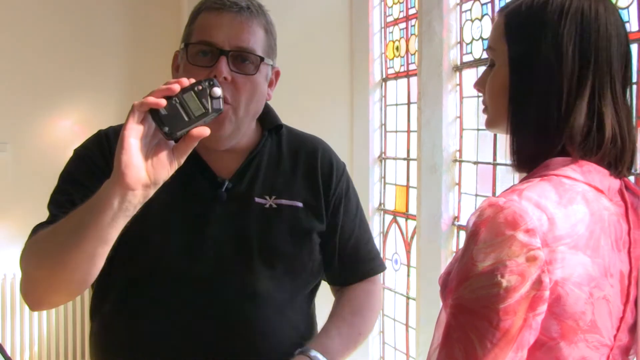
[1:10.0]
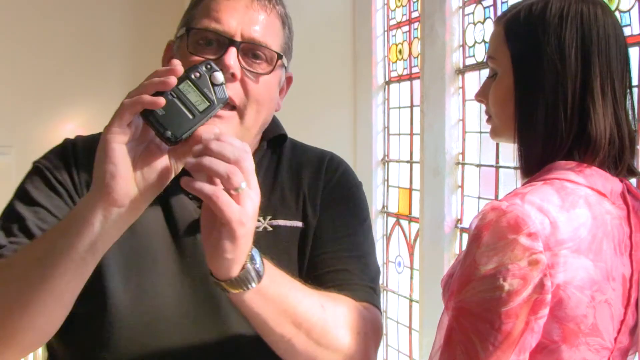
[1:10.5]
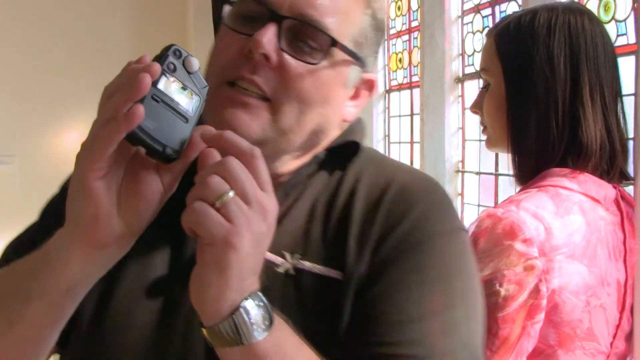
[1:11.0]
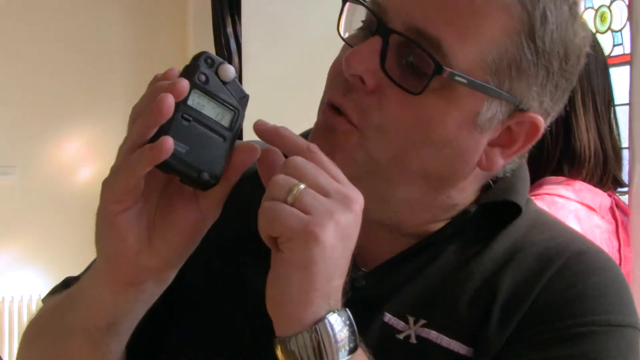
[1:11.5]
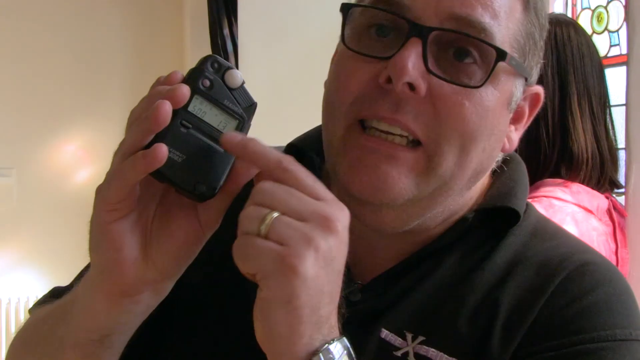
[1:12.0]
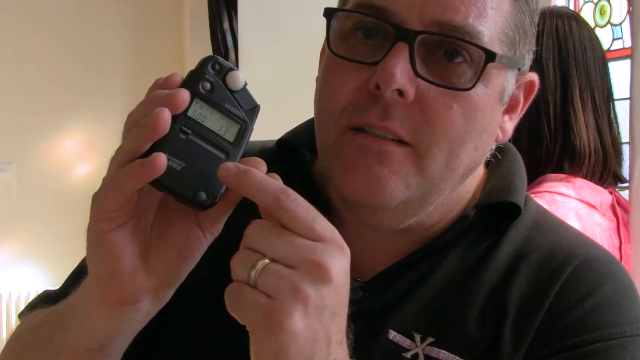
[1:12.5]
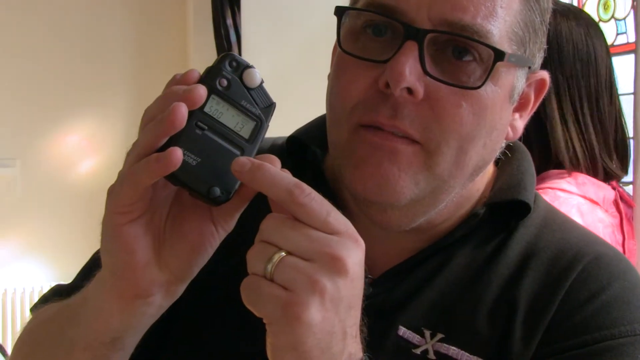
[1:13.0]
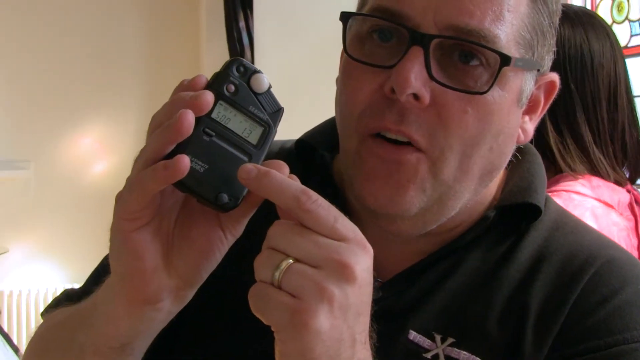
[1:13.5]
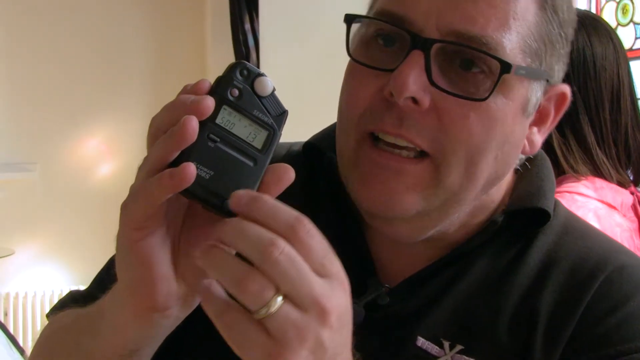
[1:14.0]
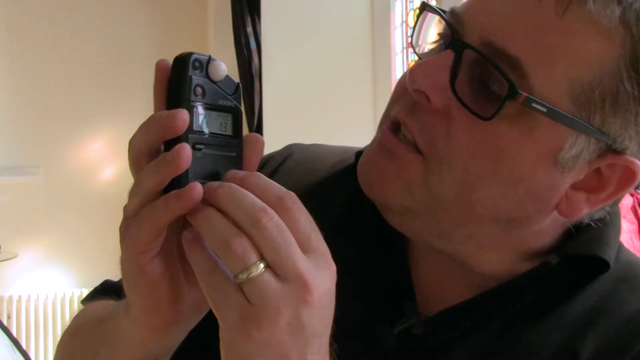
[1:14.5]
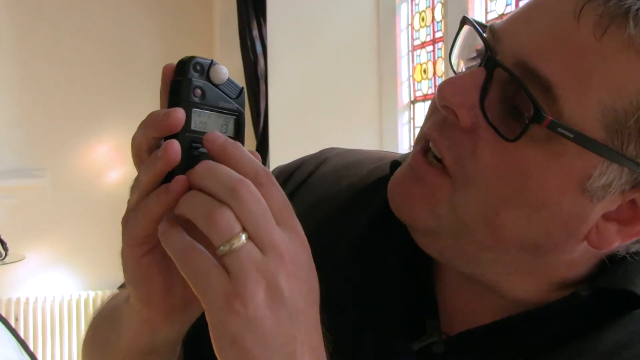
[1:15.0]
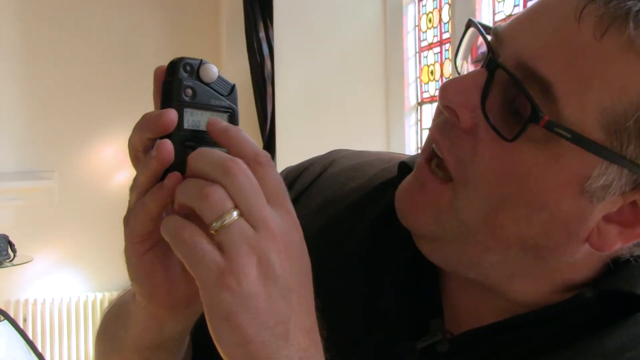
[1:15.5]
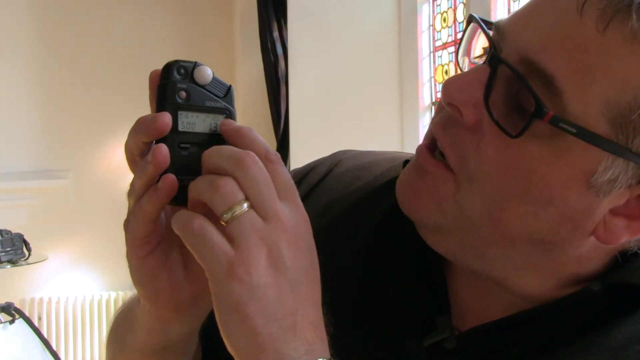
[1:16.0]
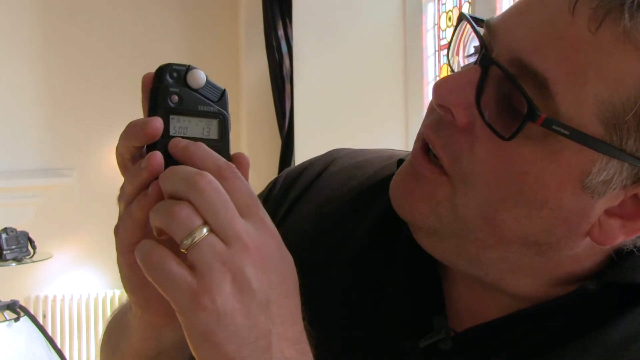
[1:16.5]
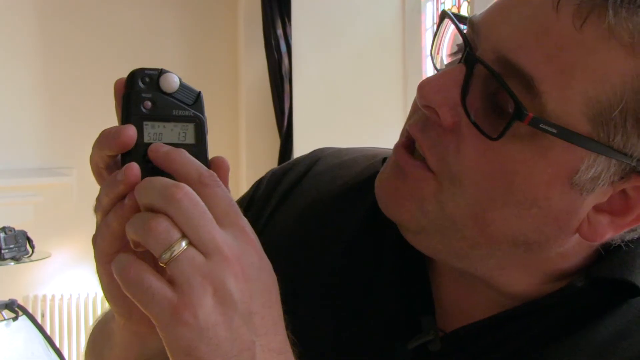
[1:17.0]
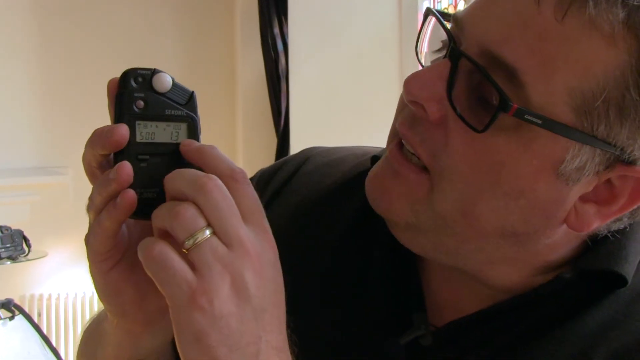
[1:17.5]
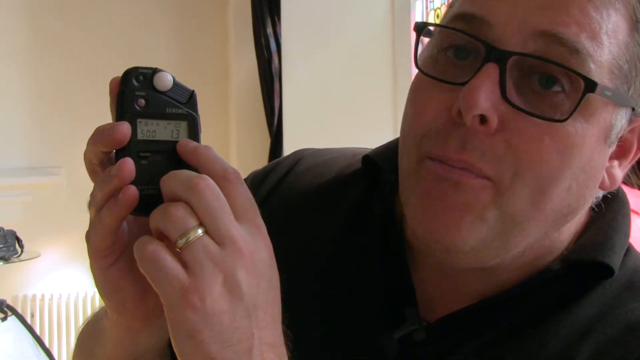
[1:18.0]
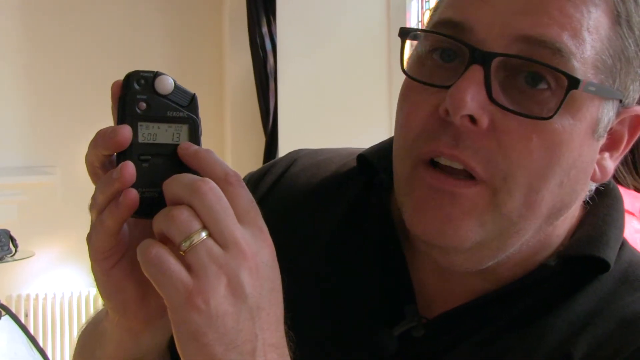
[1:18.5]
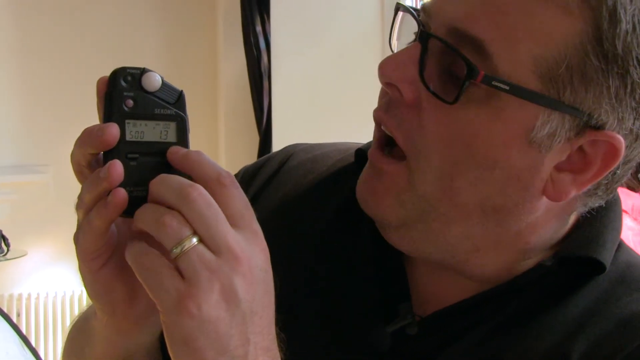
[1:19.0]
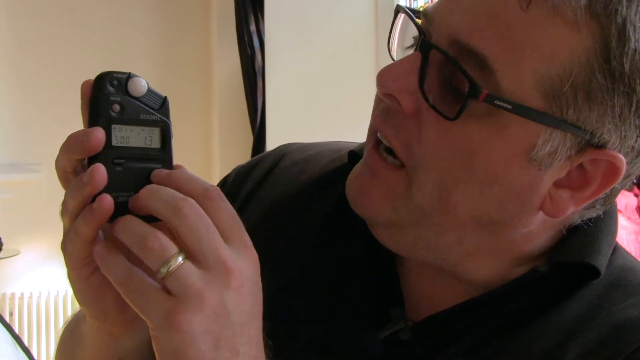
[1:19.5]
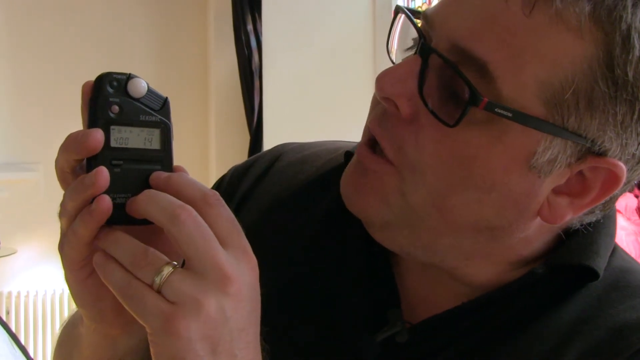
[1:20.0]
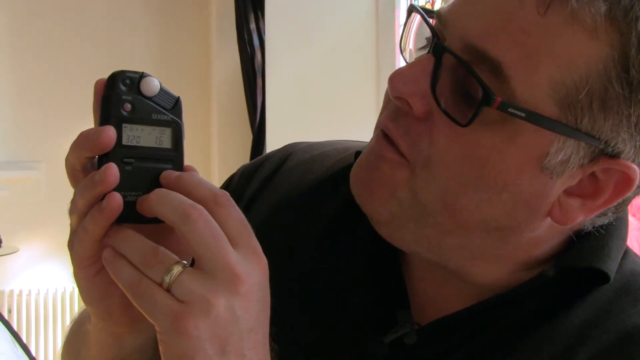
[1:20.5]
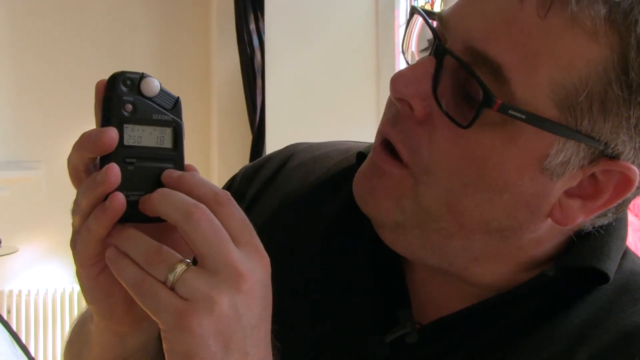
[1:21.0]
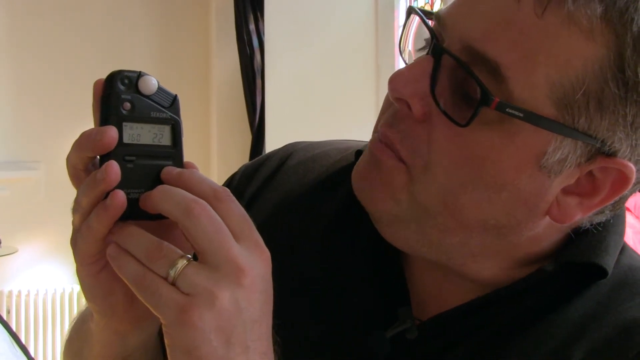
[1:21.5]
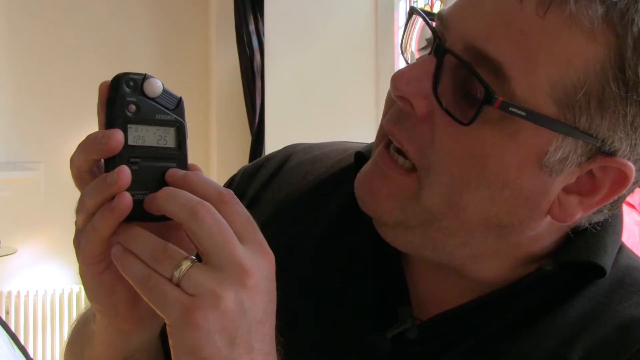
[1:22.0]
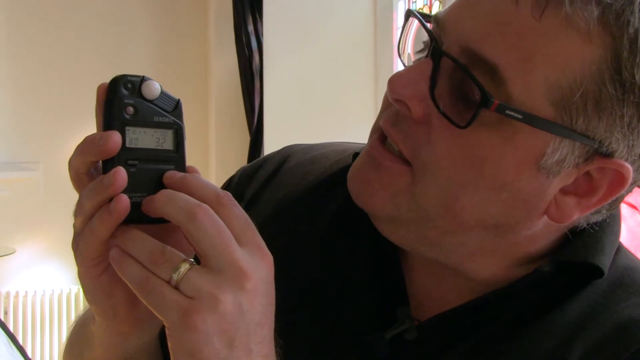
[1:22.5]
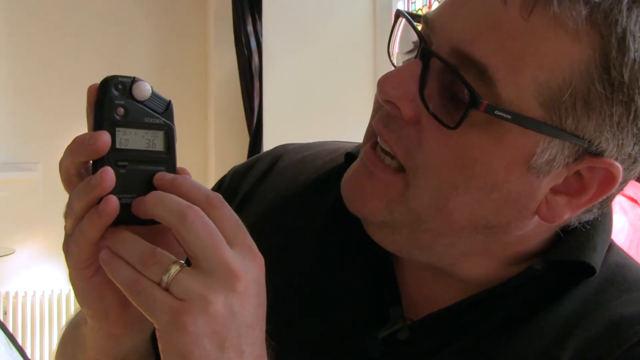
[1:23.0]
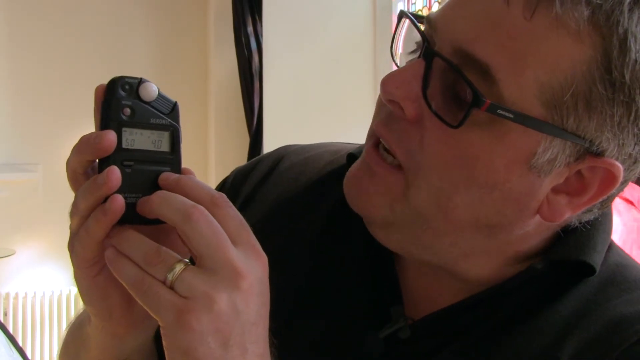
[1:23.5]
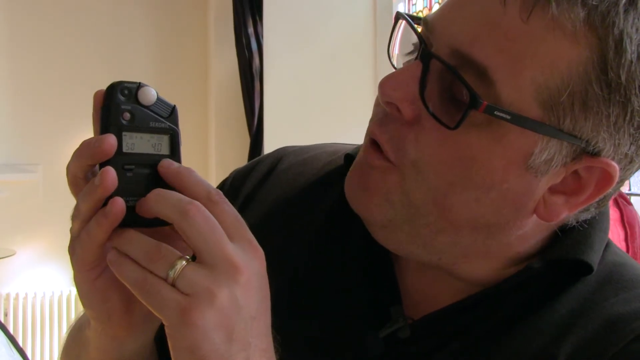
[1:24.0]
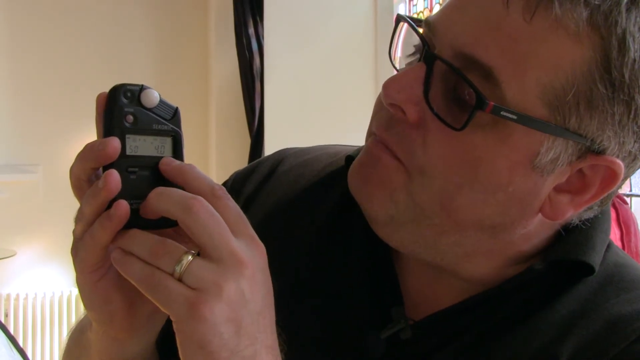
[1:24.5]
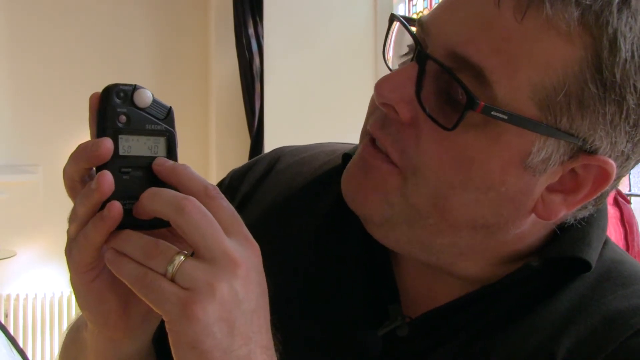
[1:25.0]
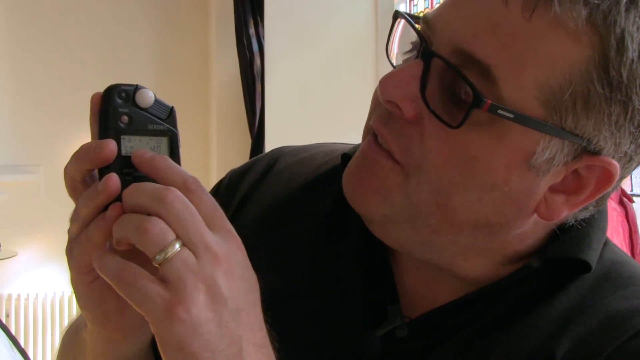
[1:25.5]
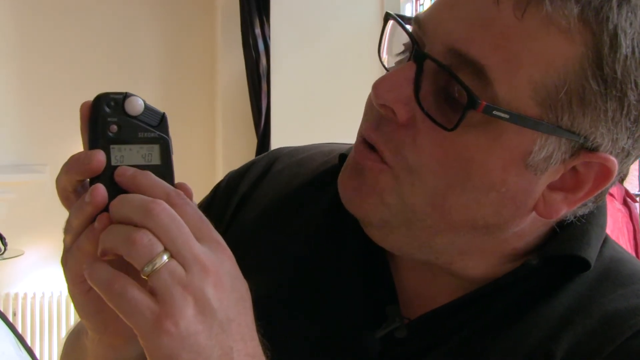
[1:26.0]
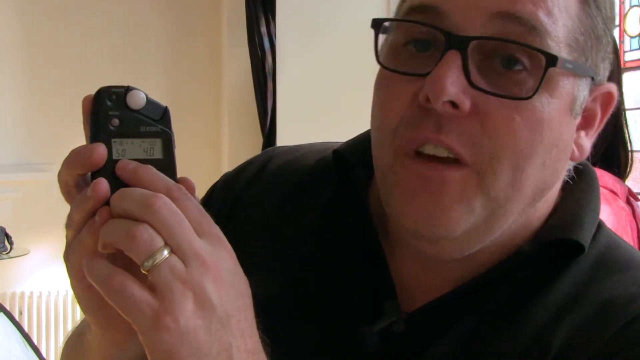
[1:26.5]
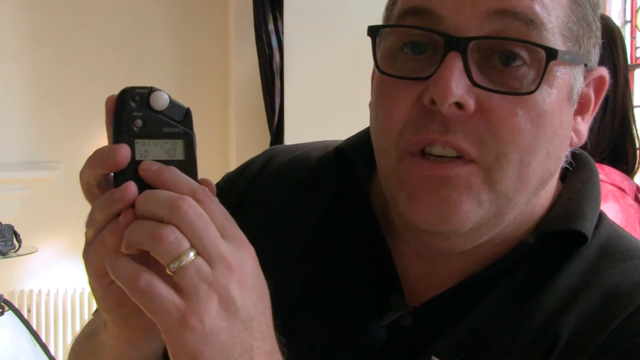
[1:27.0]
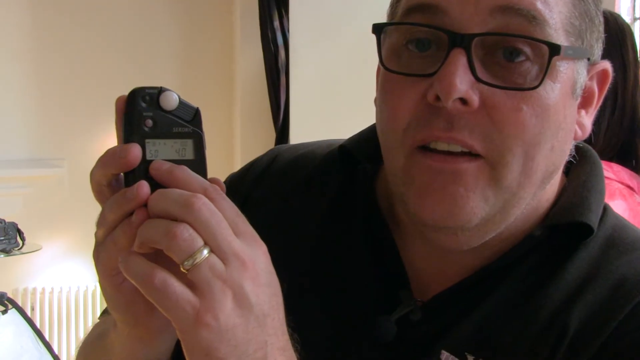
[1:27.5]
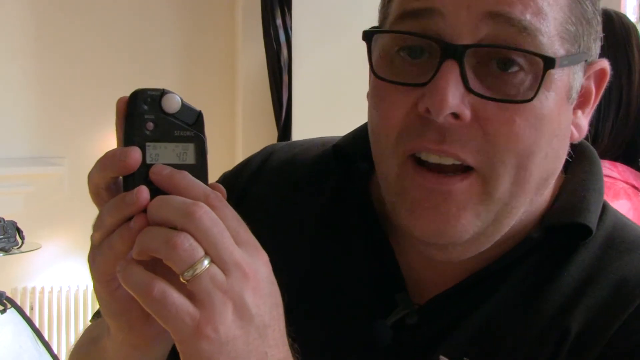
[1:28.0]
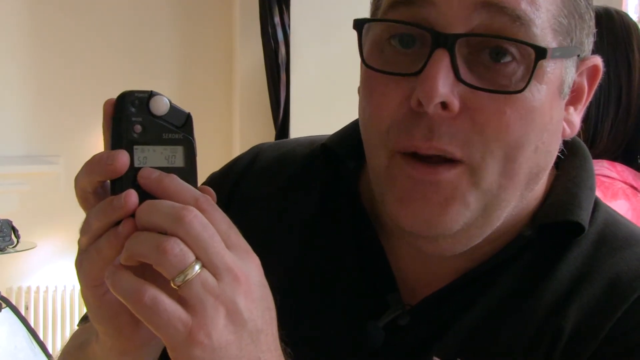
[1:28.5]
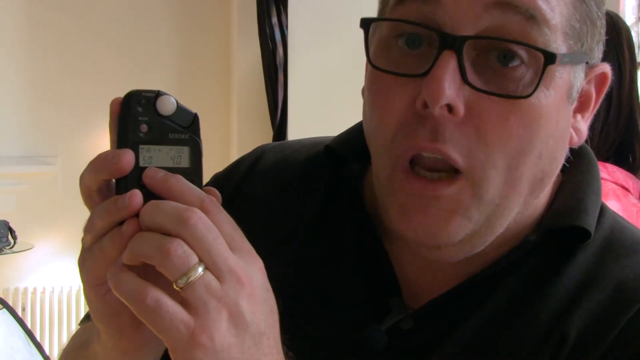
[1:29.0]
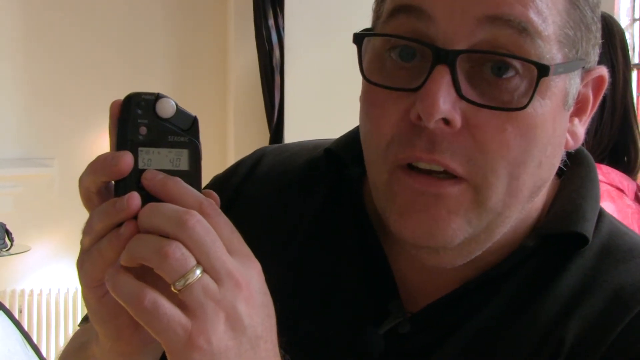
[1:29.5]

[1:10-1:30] The man gets closer to the camera with the device in his hand, talking animatedly about it and looking back and forth between the device and the camera. He points out the screen of the device and what is changing on it. He then starts pressing a button on the side of the device, and the screen changes as he pushes it. He has a big smile on his face, seemingly excited about the product. The woman in her pink dress is still standing behind him. They are in a hallway in front of the stained-glass window, and the lighting stays very similar.